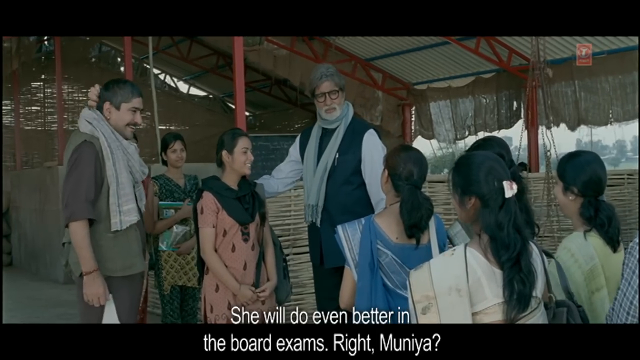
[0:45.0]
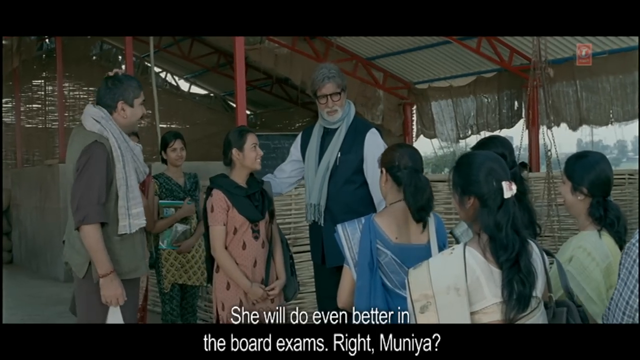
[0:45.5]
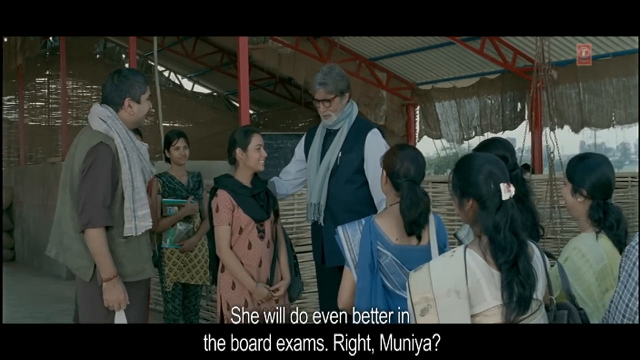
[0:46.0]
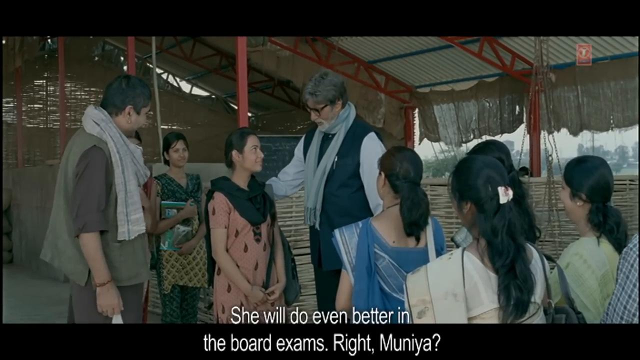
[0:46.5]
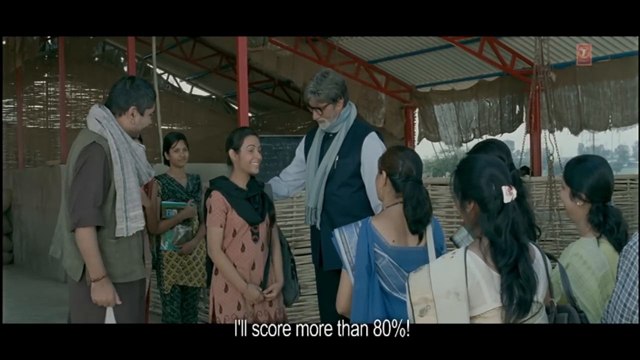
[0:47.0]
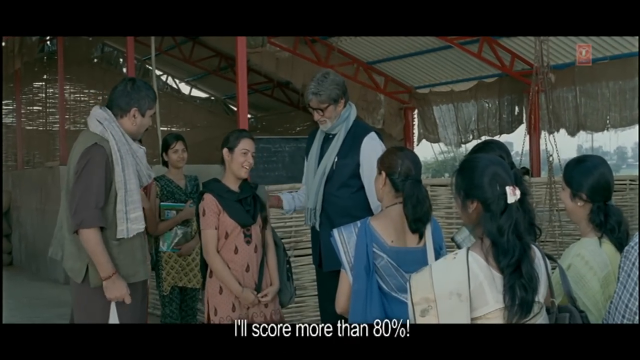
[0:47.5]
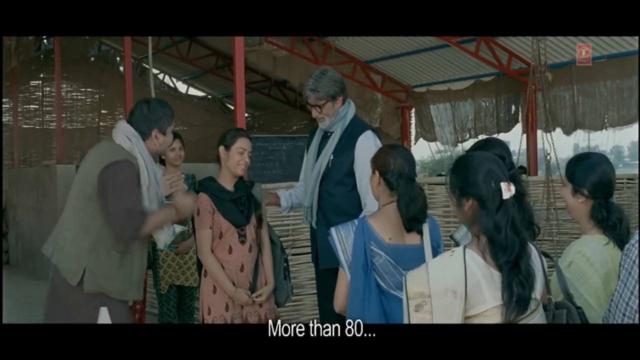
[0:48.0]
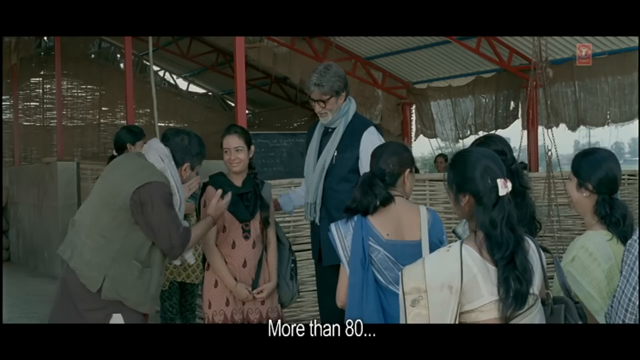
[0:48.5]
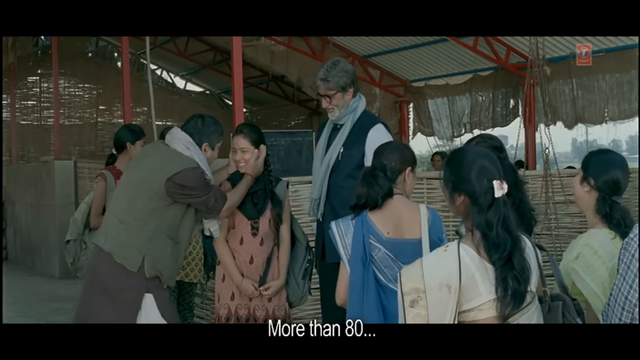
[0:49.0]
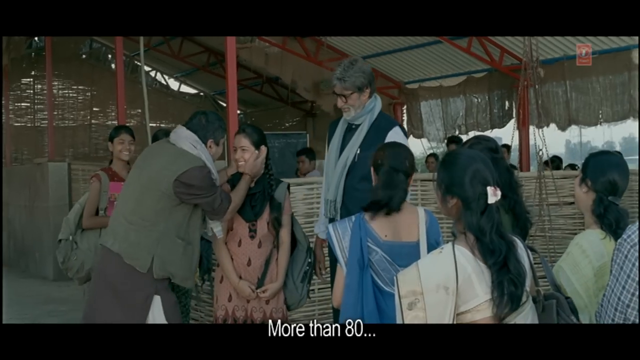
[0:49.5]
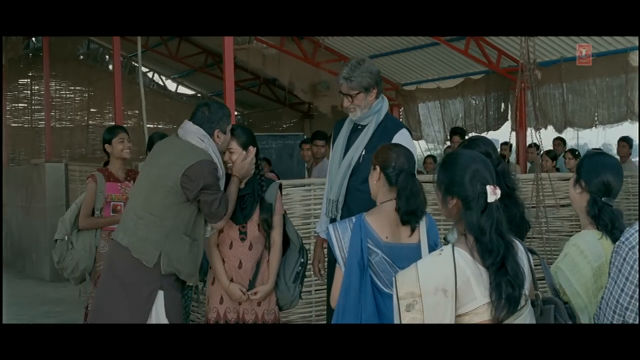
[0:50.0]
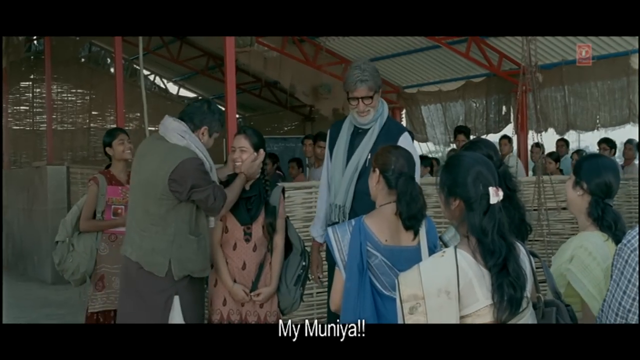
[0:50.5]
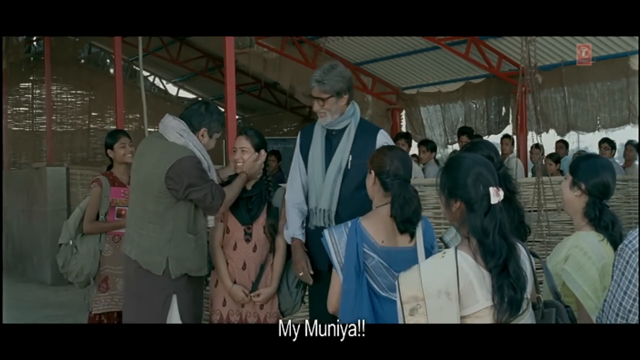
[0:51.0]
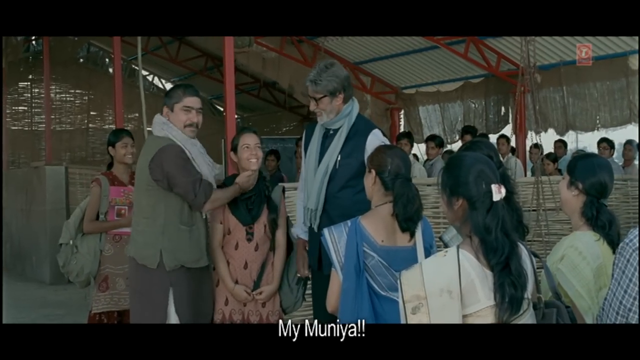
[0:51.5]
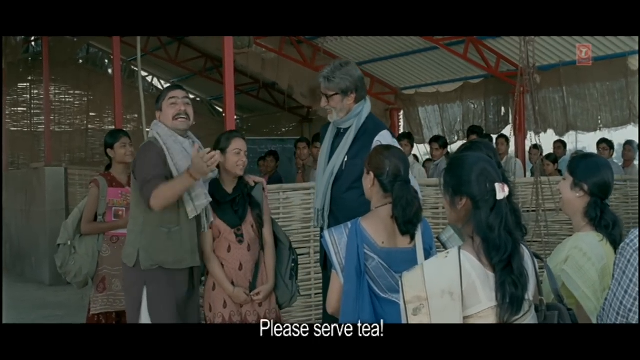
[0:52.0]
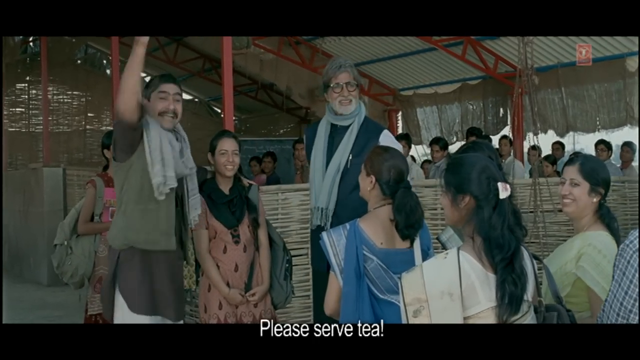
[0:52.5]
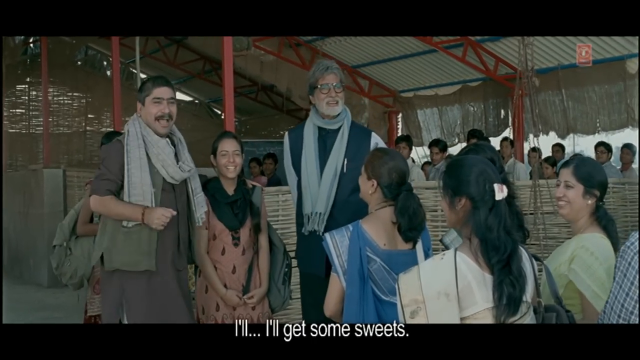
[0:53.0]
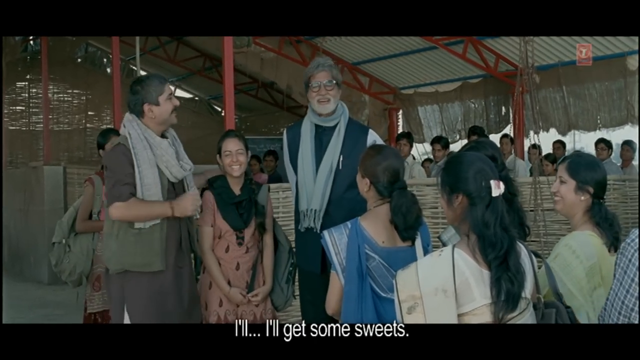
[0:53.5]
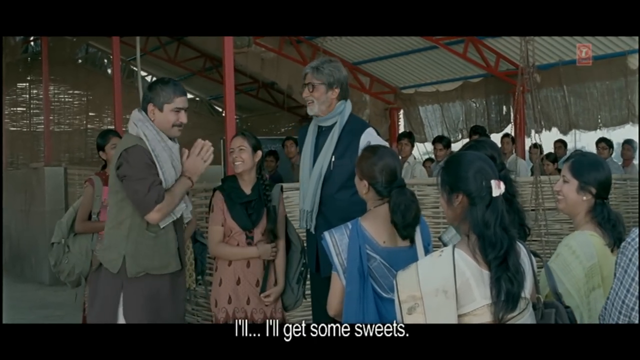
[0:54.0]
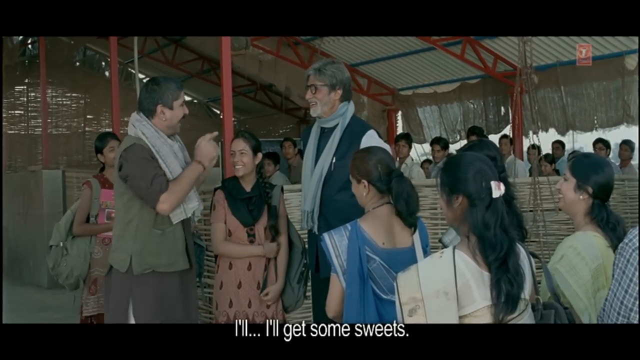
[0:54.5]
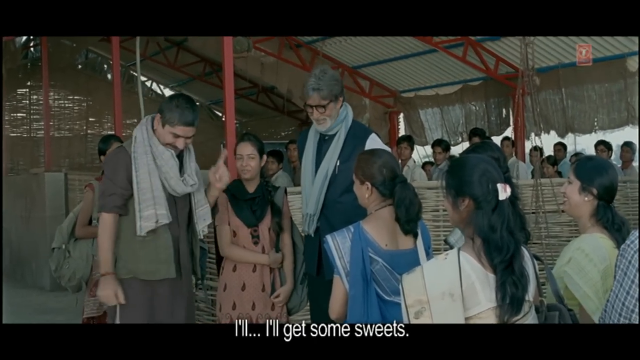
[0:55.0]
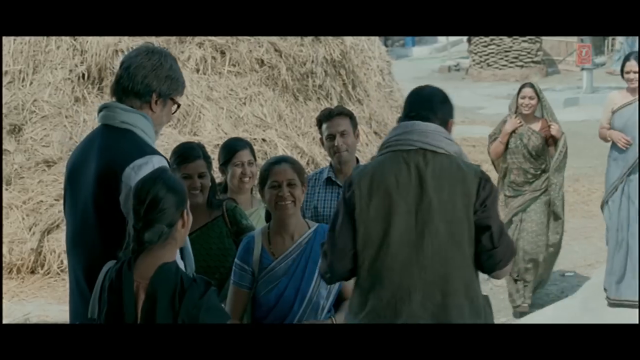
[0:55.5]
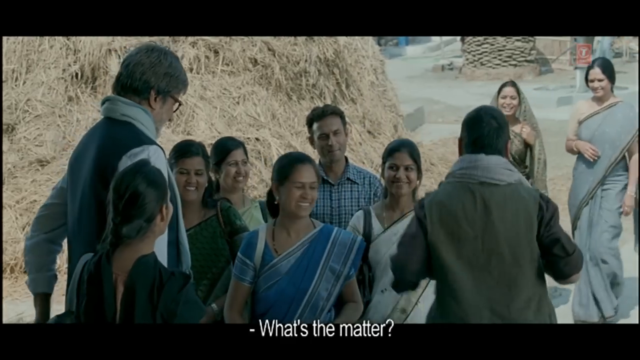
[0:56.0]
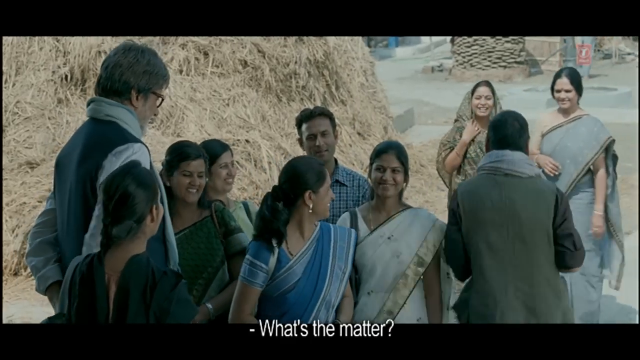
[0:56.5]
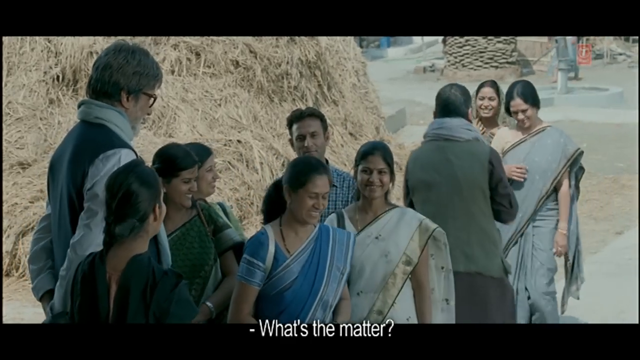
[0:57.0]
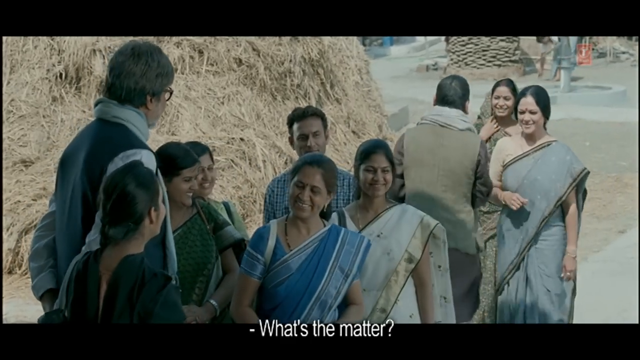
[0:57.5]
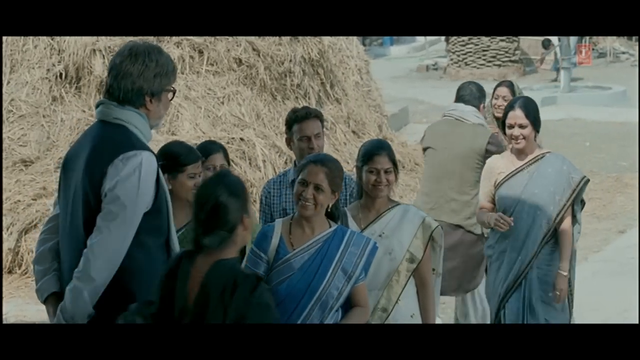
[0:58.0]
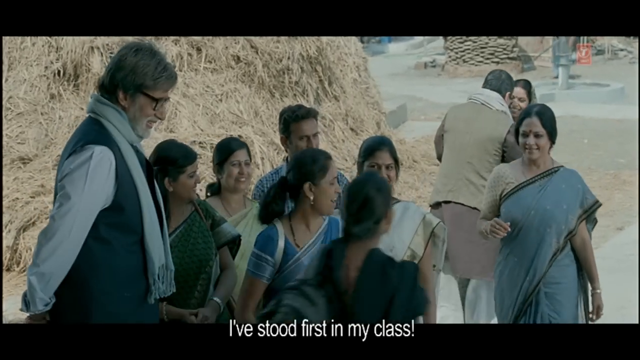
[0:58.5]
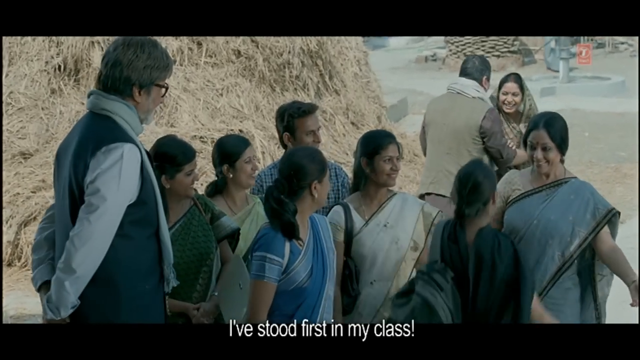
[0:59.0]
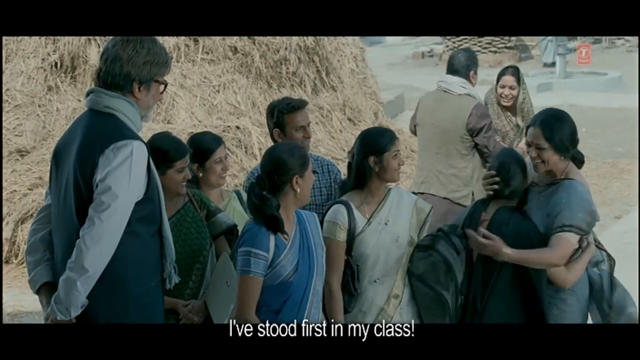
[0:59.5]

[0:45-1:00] The girl is talking while the professor keeps patting her on the back. The dad-type man from the beginning suddenly leans in, puts his hands around her face and kisses her on the top of the head. The class in the background stands up from their seats, and everyone looks at the girl, who wears a pink dress. The man, maybe her father, runs off to tell two other women who have arrived something about the girl, looking very excited. The girl then runs and hugs another woman. The professor smiles with his hands clasped behind his back, looking proud and professional.